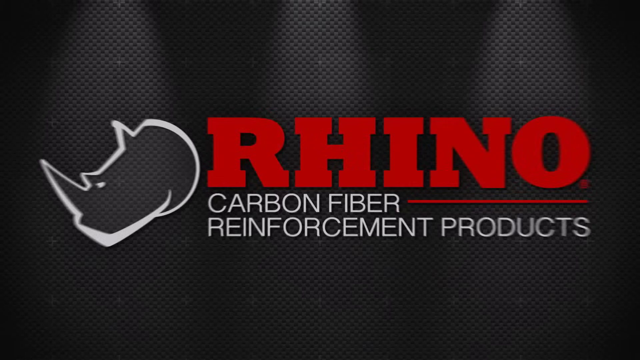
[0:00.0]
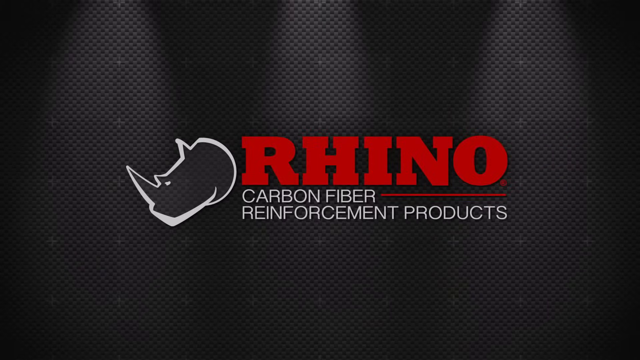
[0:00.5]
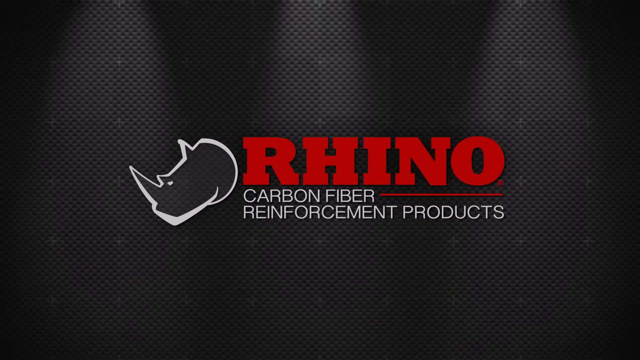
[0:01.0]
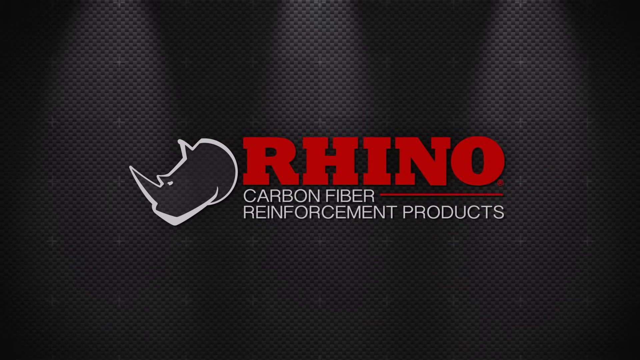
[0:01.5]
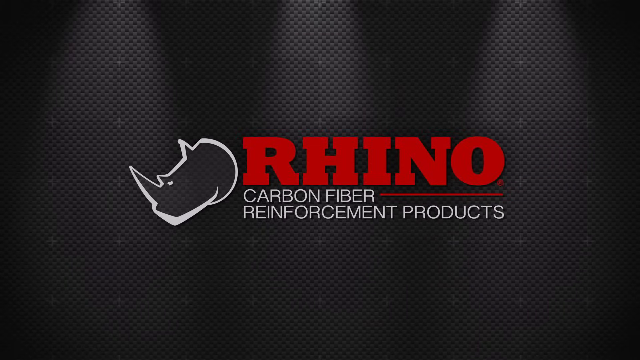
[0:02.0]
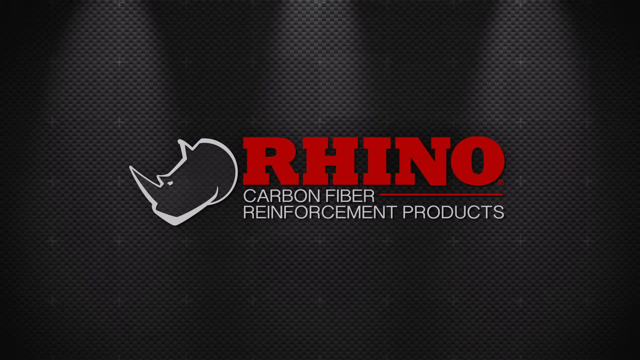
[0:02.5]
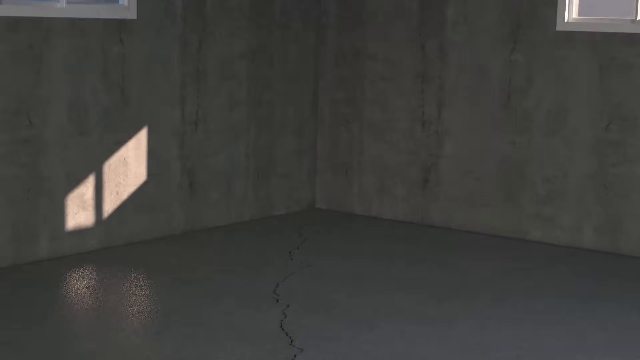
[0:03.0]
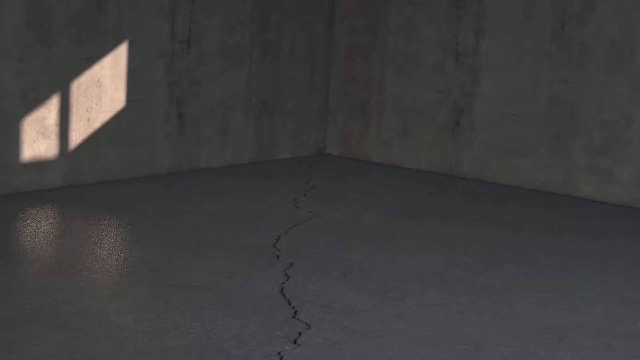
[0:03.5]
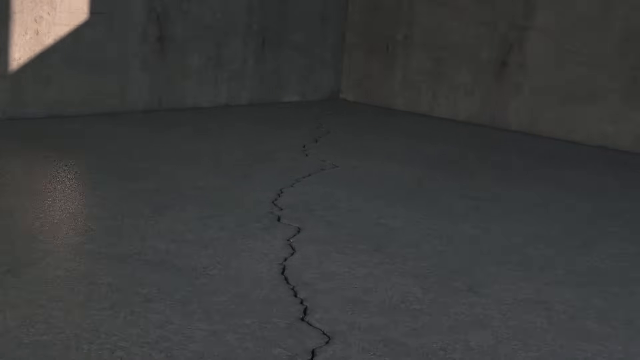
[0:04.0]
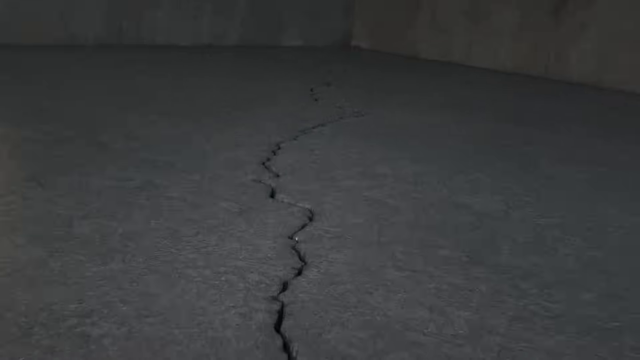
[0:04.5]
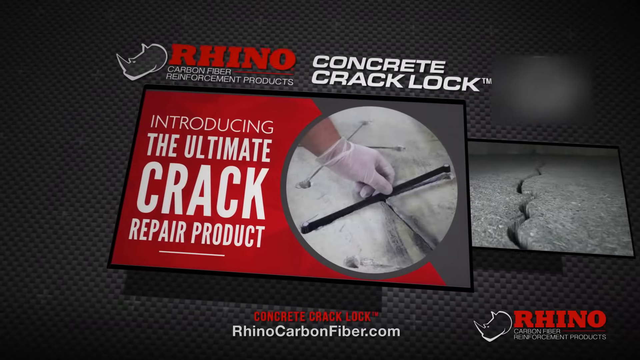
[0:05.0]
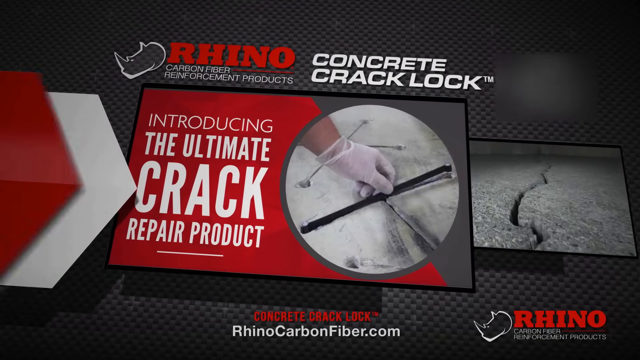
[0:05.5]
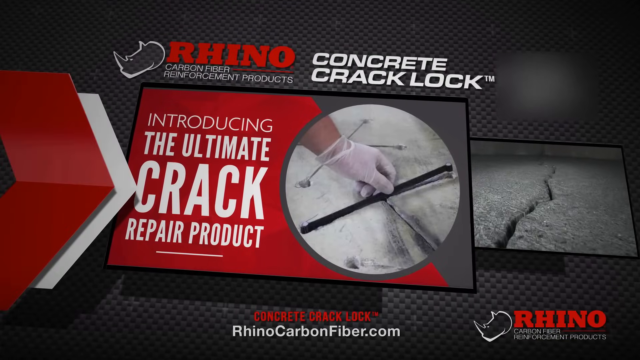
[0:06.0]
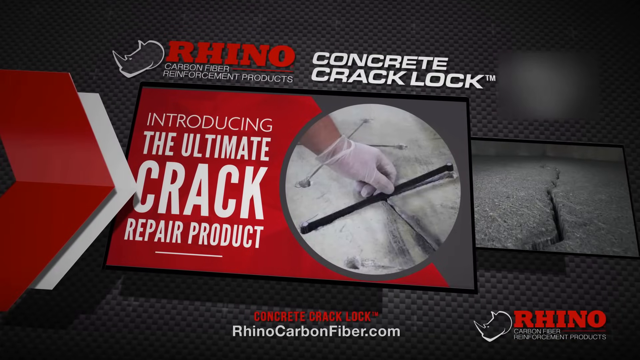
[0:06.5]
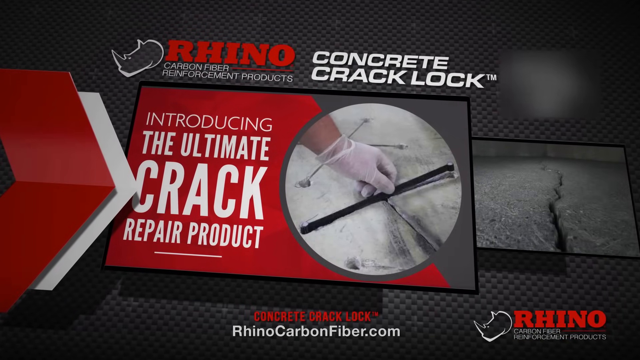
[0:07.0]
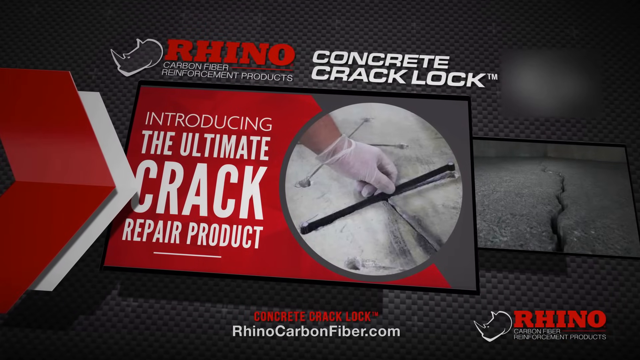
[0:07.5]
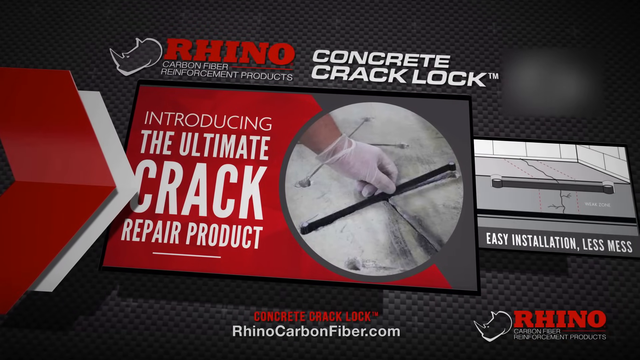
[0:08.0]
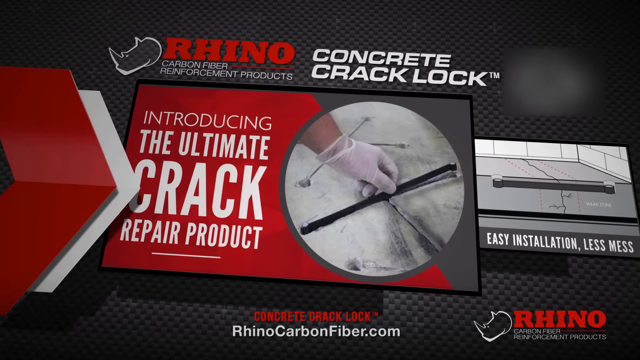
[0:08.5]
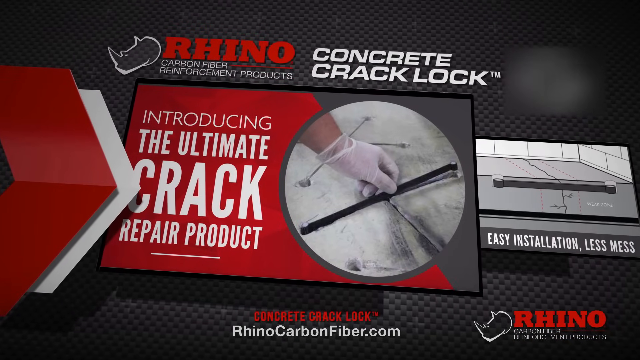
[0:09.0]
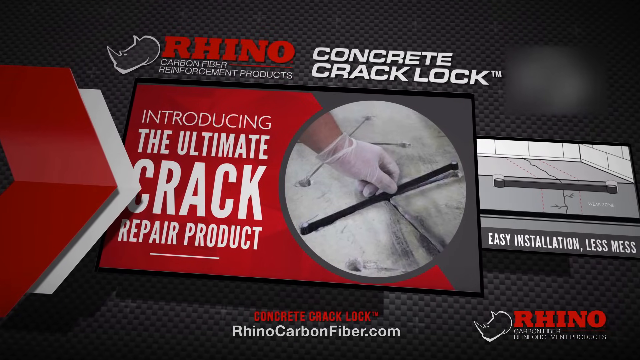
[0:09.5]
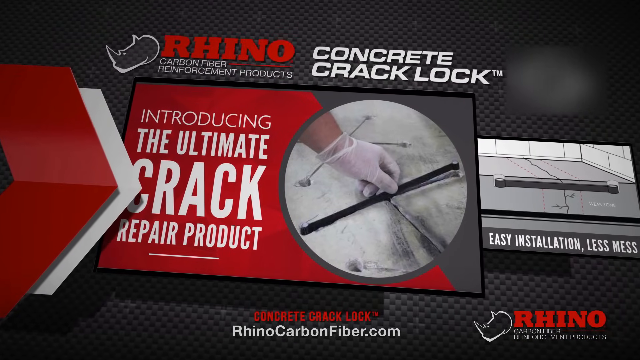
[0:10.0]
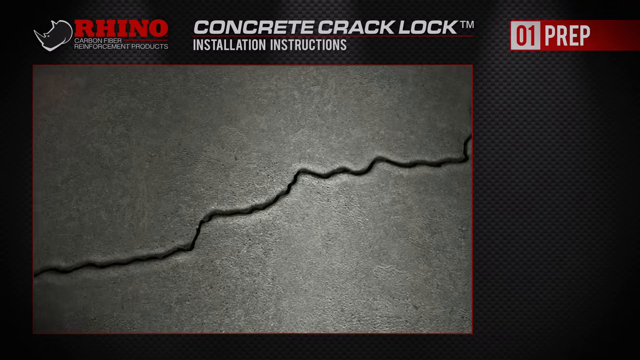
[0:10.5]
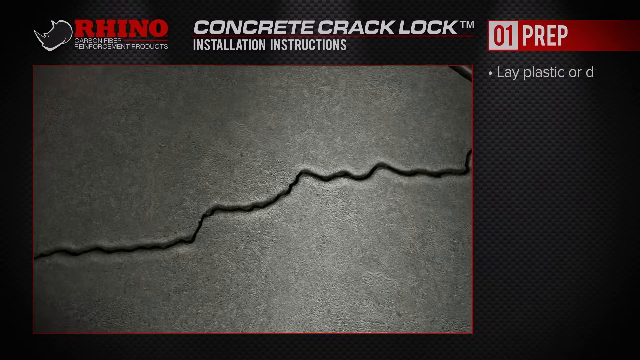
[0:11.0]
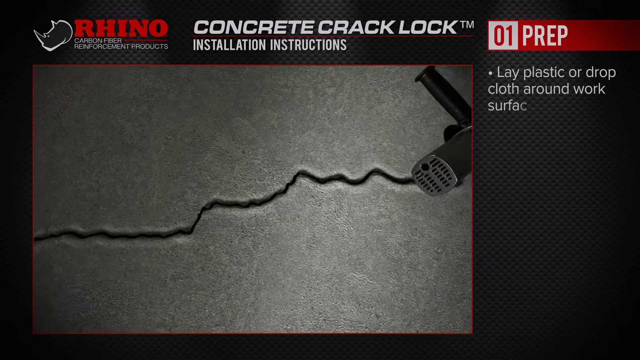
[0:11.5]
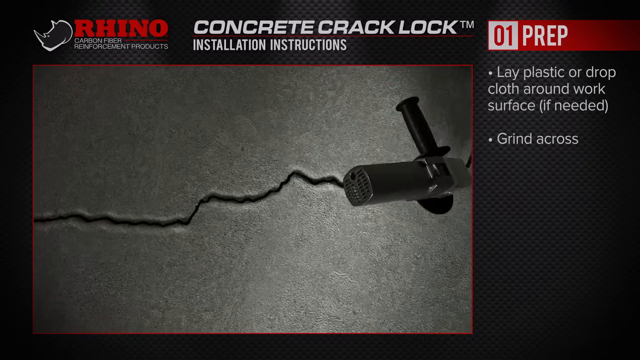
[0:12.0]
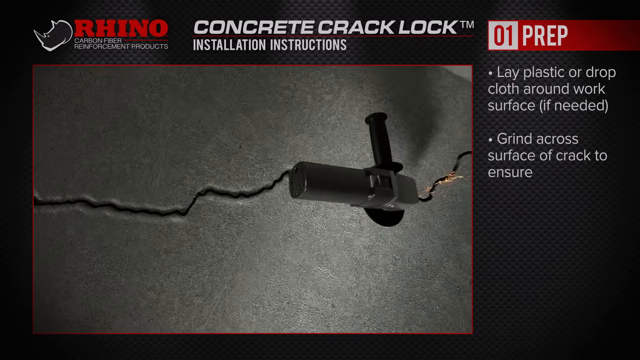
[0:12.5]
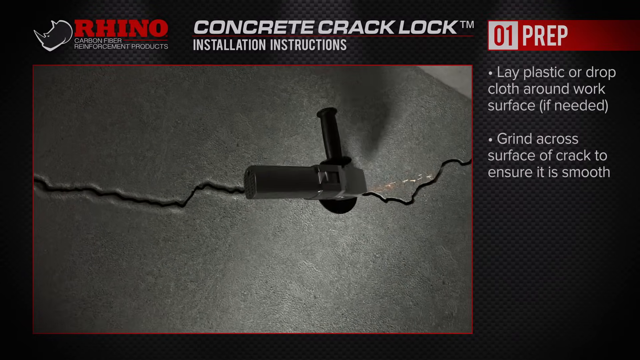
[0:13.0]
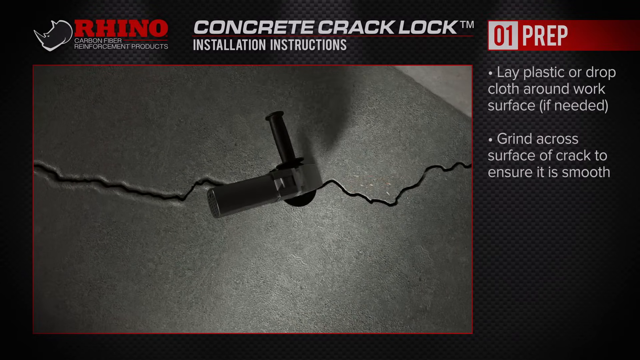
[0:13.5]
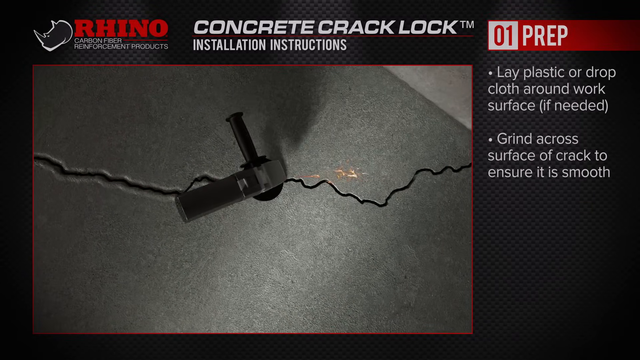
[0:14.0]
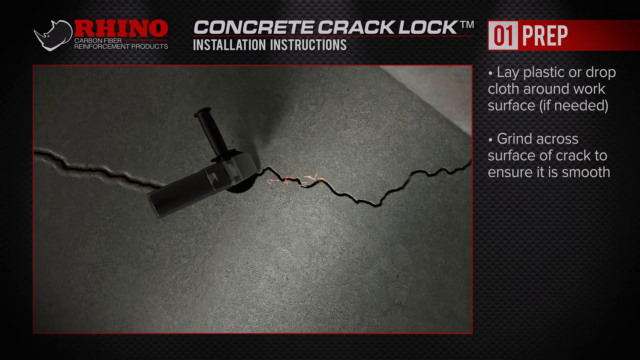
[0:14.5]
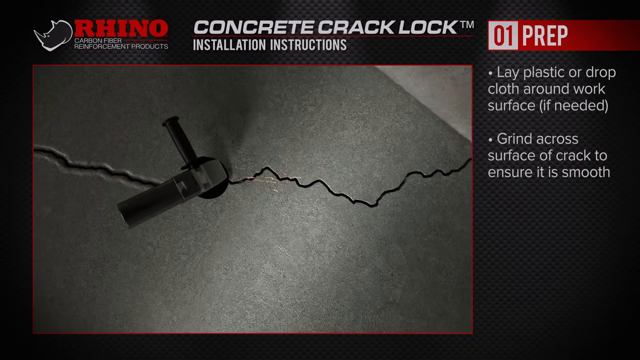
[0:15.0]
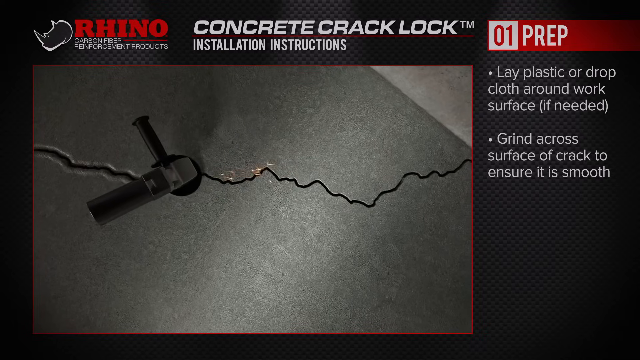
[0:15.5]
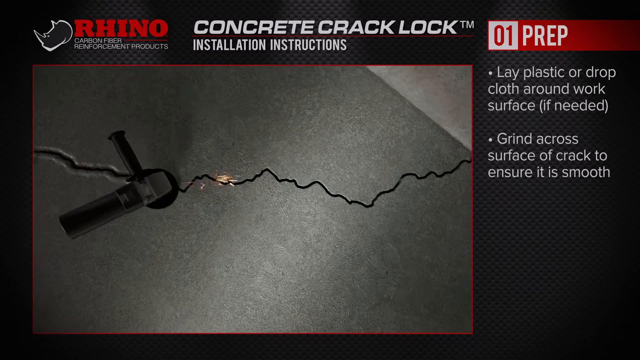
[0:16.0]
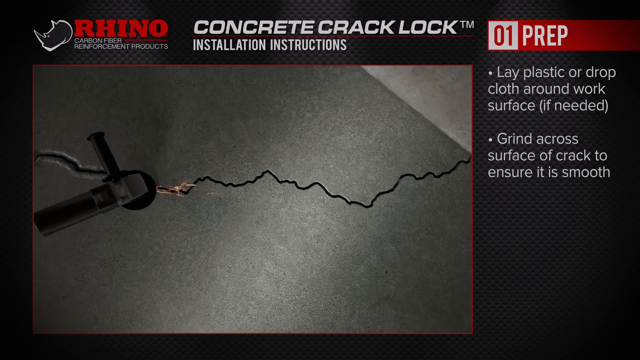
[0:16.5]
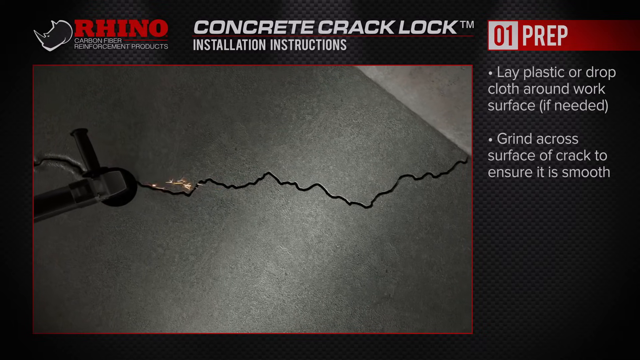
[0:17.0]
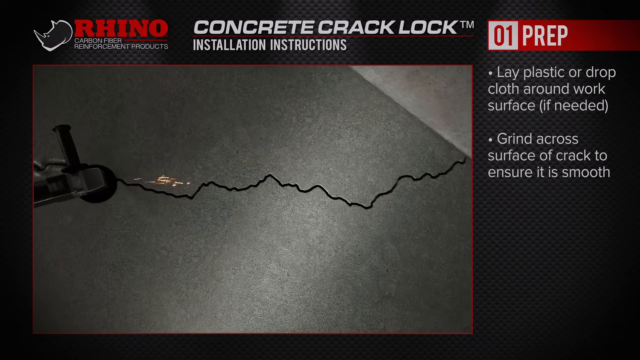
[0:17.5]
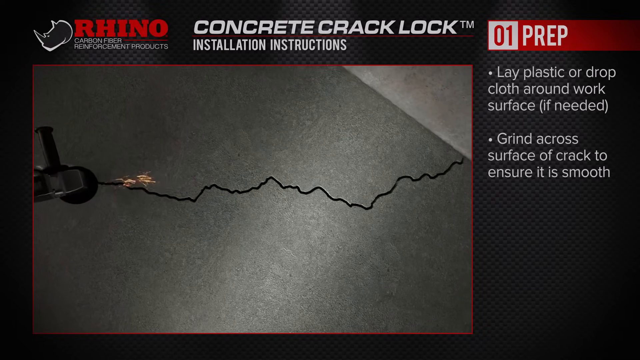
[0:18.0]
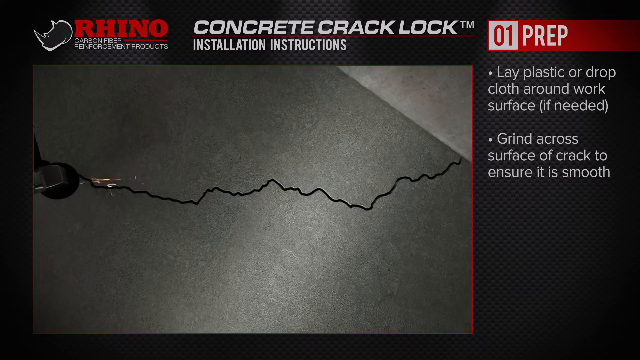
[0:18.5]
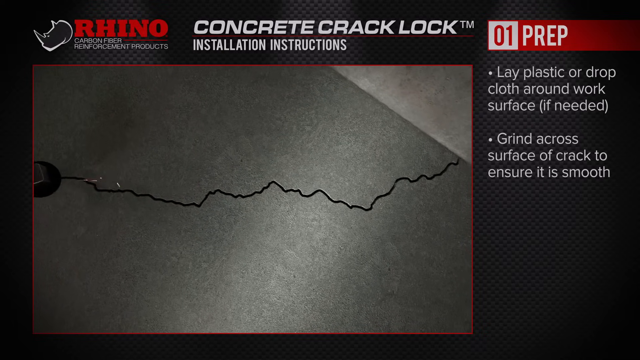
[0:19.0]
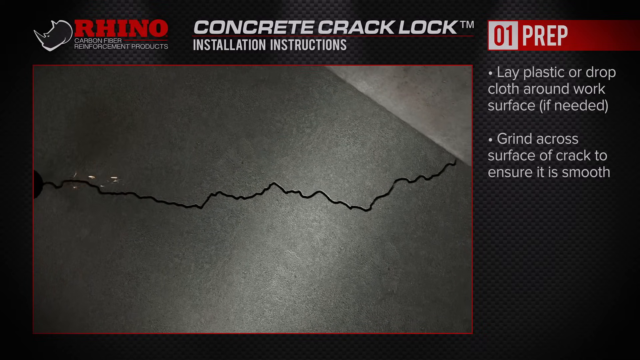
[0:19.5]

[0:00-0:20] The video opens on an image of the Rhino Carbon Fiber Reinforcement product. "Rhino" is written in red, and there is an image of a rhino with its horn sticking out. The background is black, and a touch of three lights shines on the Rhino Carbon Fiber Reinforcement product name. The video fades to the inside of a building and shows the floor cracking; the ground seems to be cracking. It then transitions to another image of the Rhino Carbon Fiber Reinforcement product logo, with "concrete crack log" written in white, and an image stating that they are introducing "the ultimate crack repair" product. There is an image of a gloved hand holding a black, stick-like object, with arrows pointing to the box, one red and one white. A video of the cracked floor plays on the right-hand side, then the view shows the black, ruler-like object, with information underneath saying "easy installation" and "less mess". Next, the cracked floor is shown being riveted by an object as a step-by-step guide to fixing the cracked floor begins. The text reads "number one prep", with "prep" in white on a red background. It says to lay plastic around the work surface if needed, then "grind across the surface of the crack to ensure that it is smooth". As the device works through the cracked floor, it gives off fire-looking sparks. The video then transitions back to the Rhino Carbon Fiber Reinforcement product logo and image.